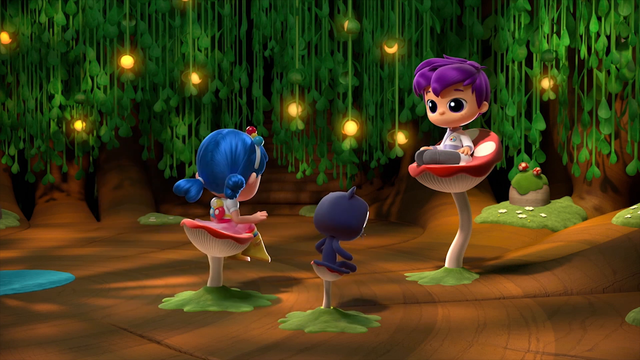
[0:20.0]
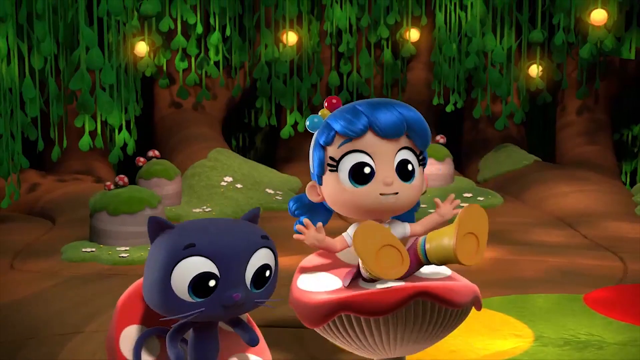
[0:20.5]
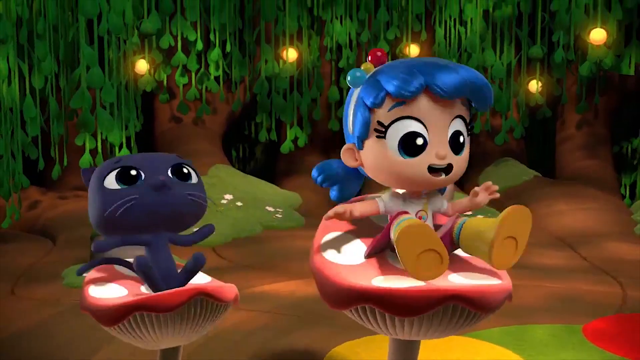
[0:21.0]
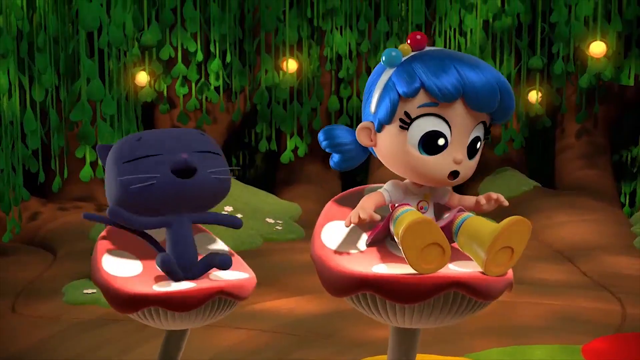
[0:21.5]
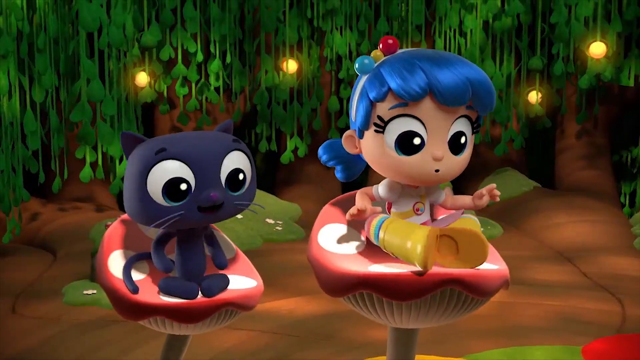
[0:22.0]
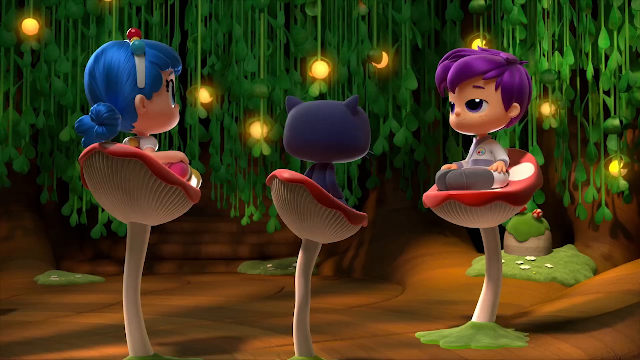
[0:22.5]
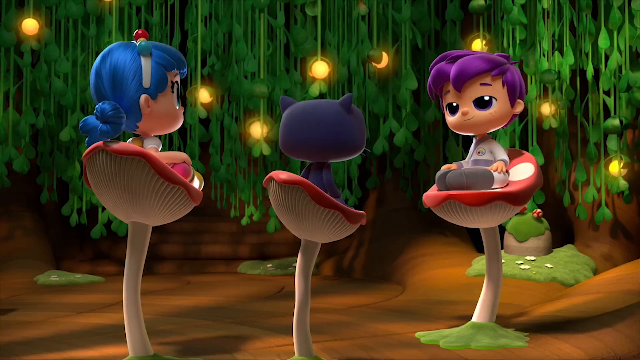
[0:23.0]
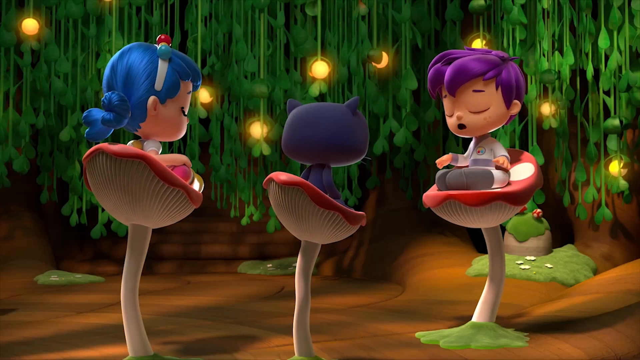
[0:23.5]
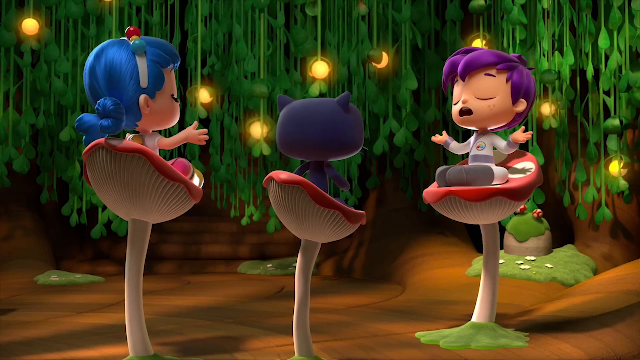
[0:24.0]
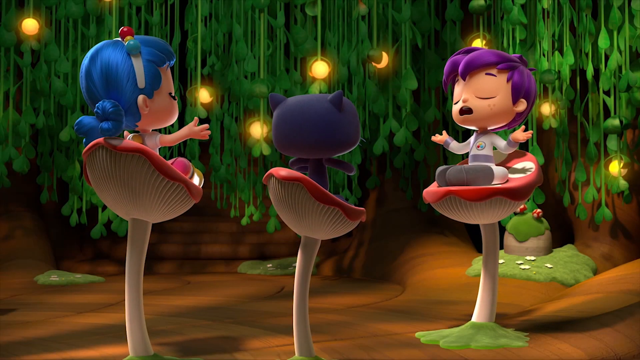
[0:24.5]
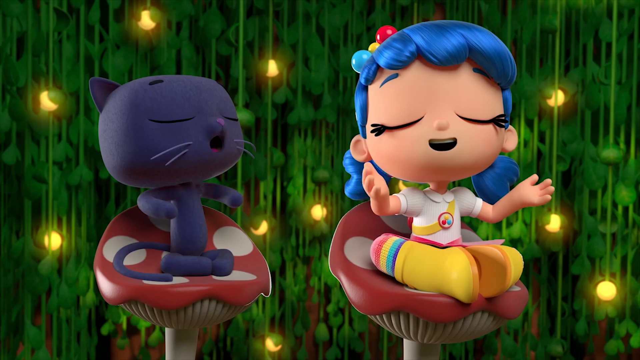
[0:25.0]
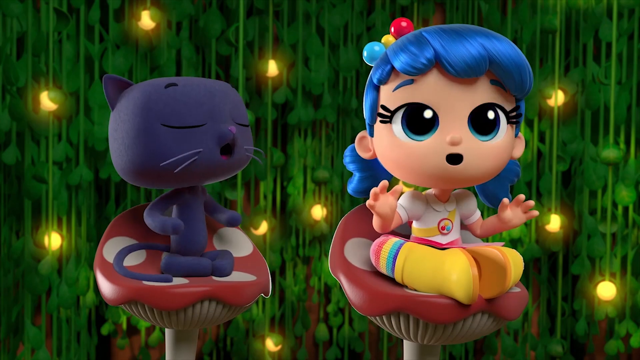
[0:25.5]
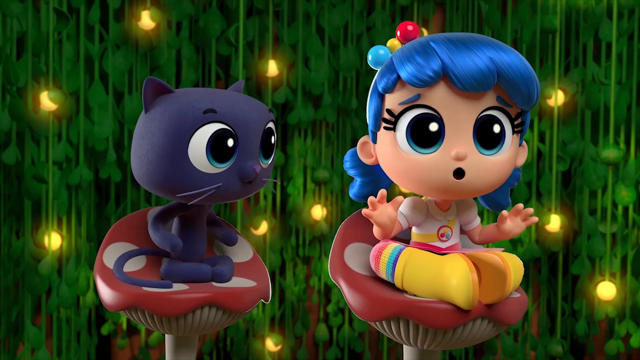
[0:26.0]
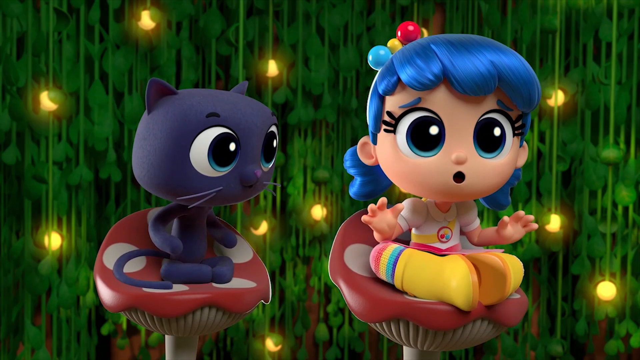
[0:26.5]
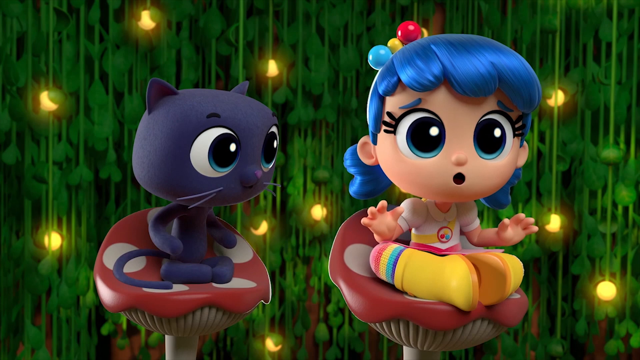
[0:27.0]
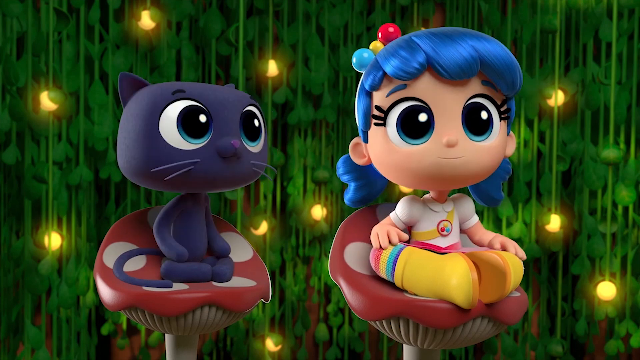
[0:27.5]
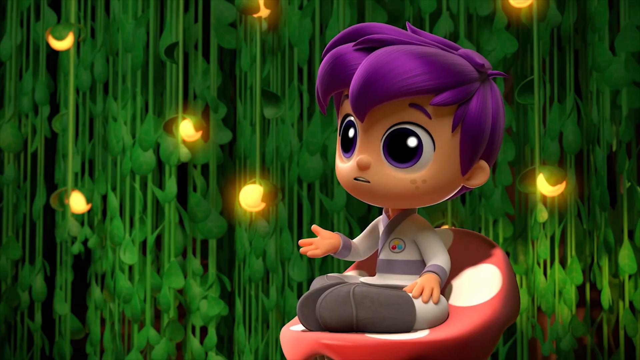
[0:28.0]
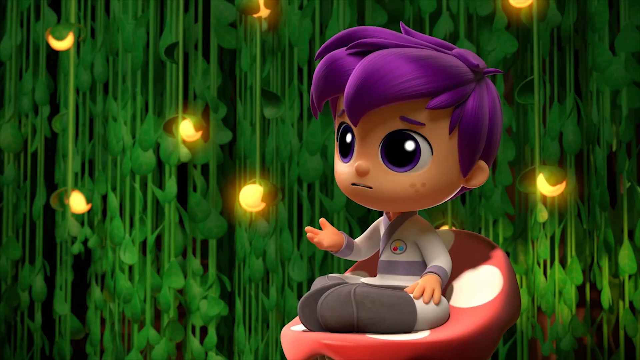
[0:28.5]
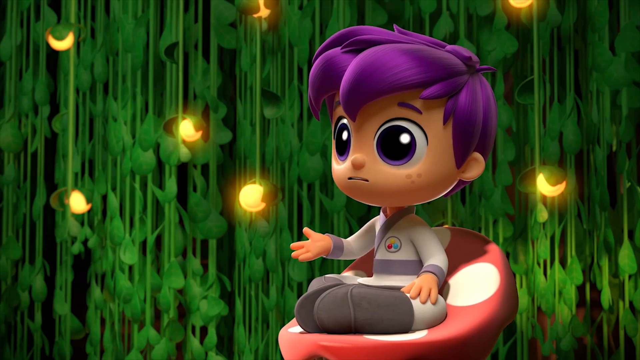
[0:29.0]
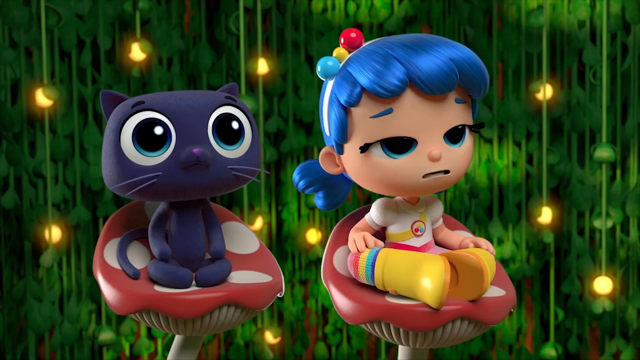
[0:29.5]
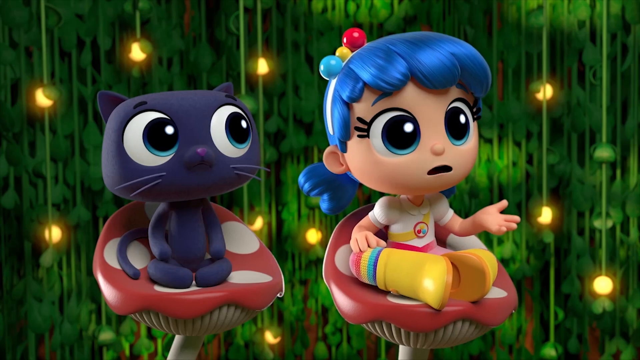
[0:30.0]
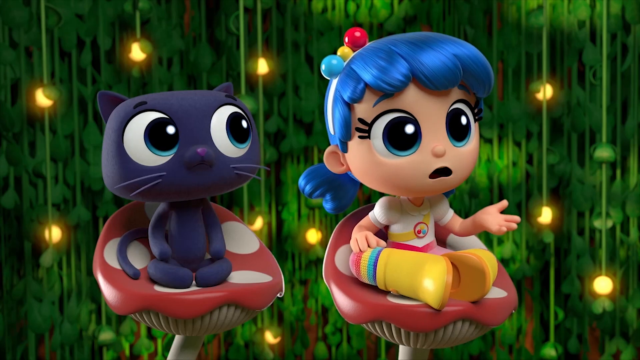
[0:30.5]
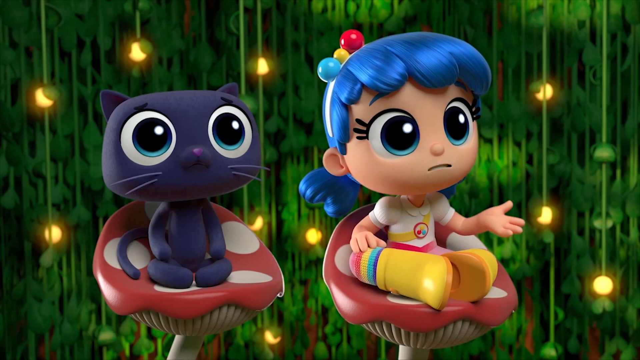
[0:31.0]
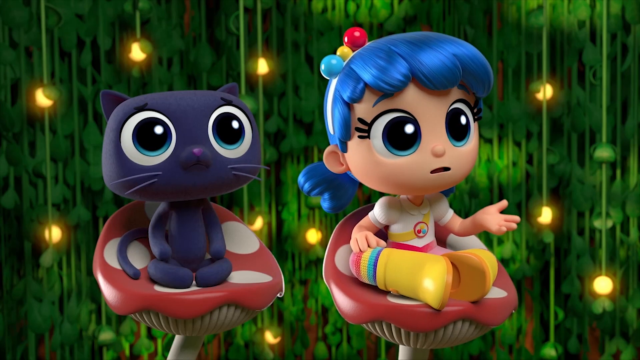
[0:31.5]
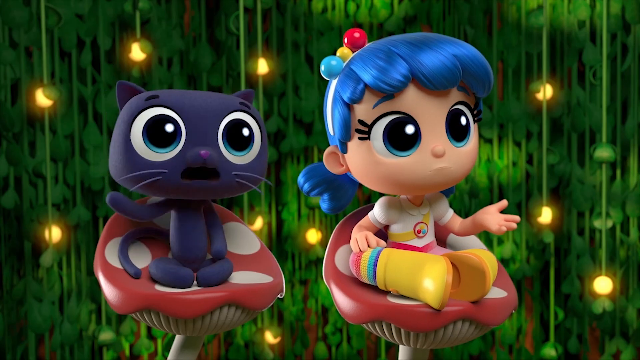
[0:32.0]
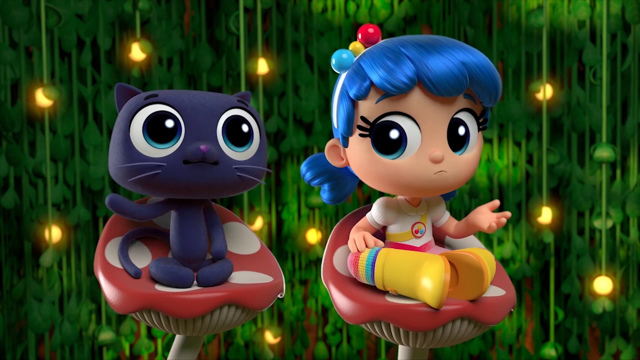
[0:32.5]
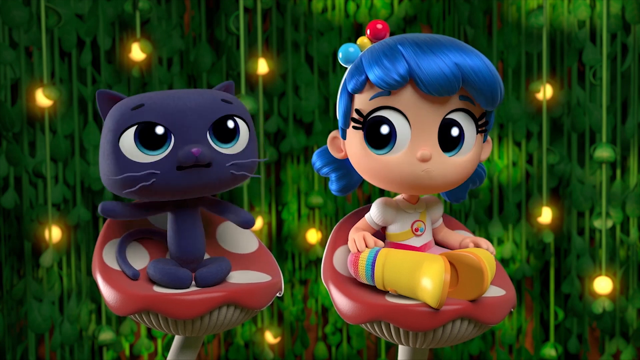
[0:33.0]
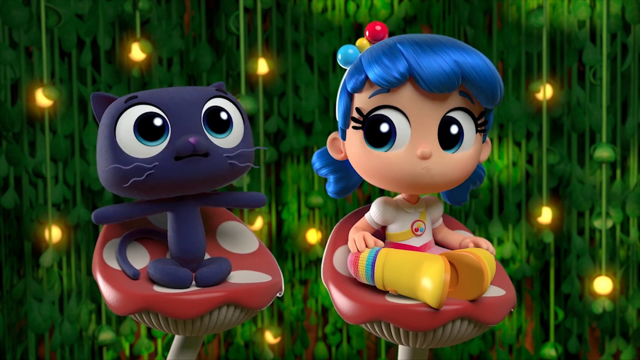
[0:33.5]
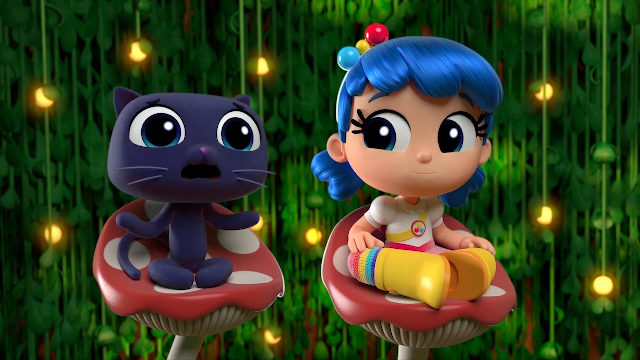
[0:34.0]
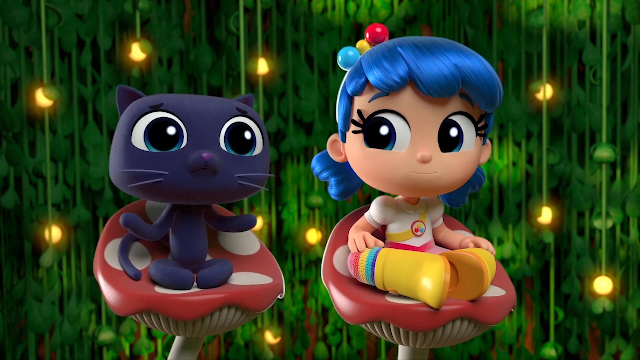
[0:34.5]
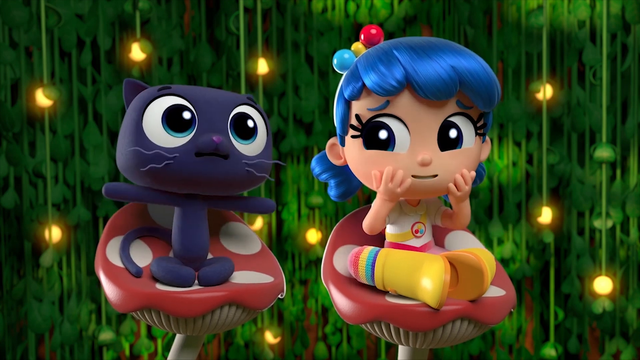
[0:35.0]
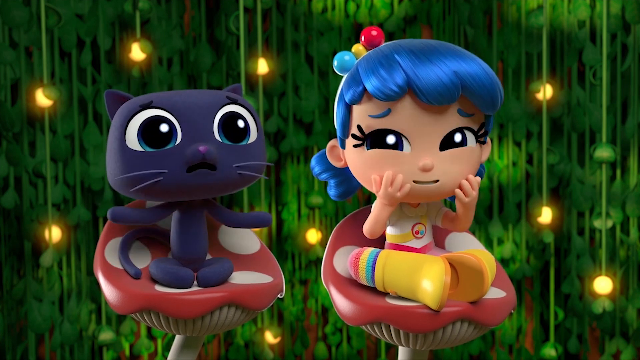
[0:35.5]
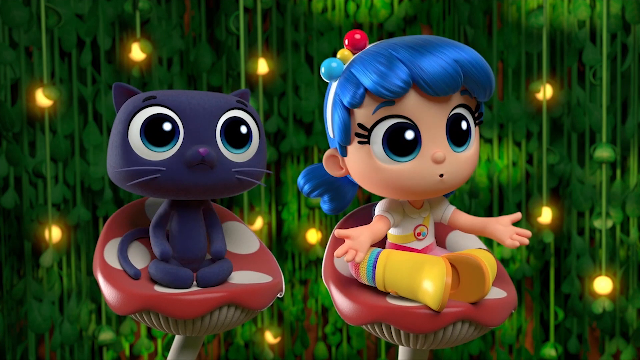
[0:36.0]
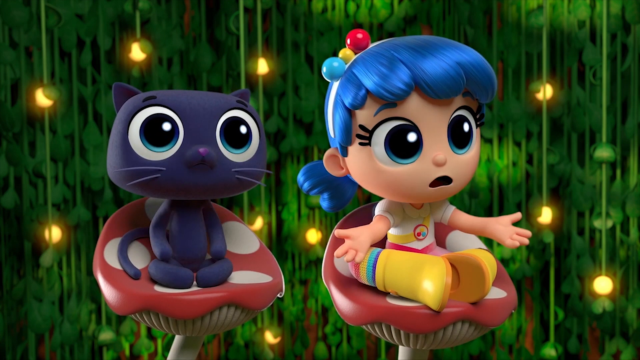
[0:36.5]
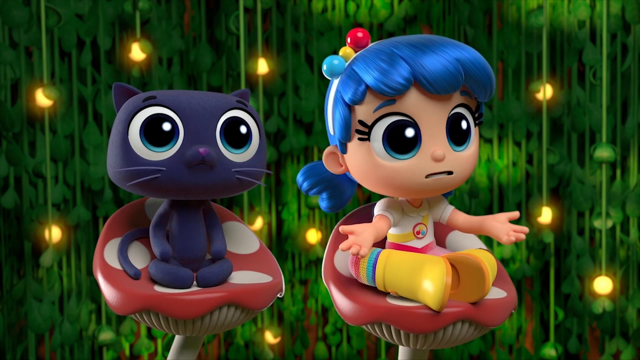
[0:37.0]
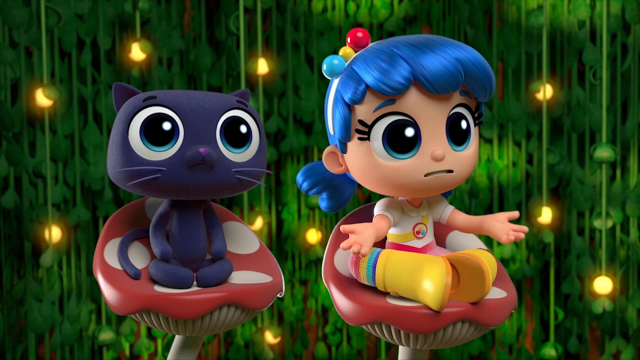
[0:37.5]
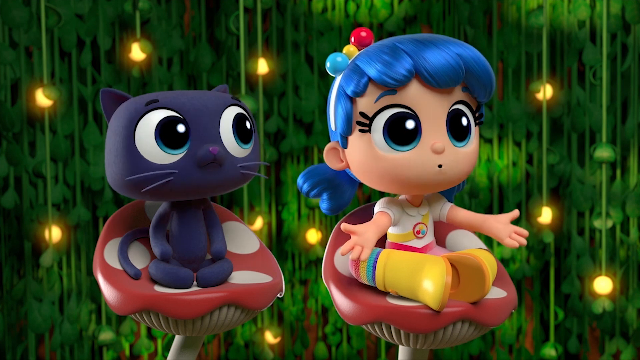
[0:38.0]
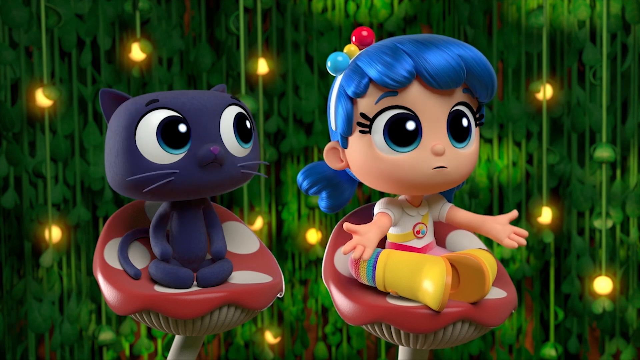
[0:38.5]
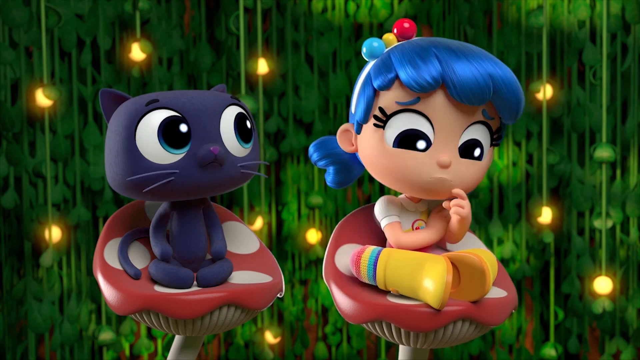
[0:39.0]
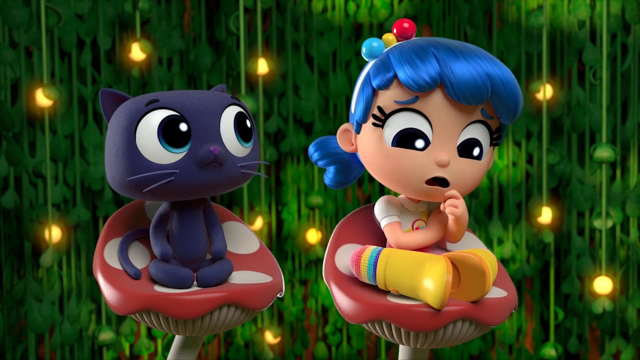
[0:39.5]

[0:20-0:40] The mushroom is kind of curved and they are kind of rocking as they become very tall, like high-chair-looking seats being cranked up. It is kind of curved and tilts towards them. It almost looks like they are doing namaste, trying to relax. The boy makes an O face, showing he has purple eyes, purple hair and purple everything. He wears gray shoes. The girl has a blue, red and yellow bow and a yellow strap starting on her side and curving up. She also has the same red, yellow and blue thing on the front of her shirt, and she wears rainbow socks with yellow shoes. The boy kind of looks over at the cat, which looks like it is freaking out; its whiskers are kind of shaking or vibrating.